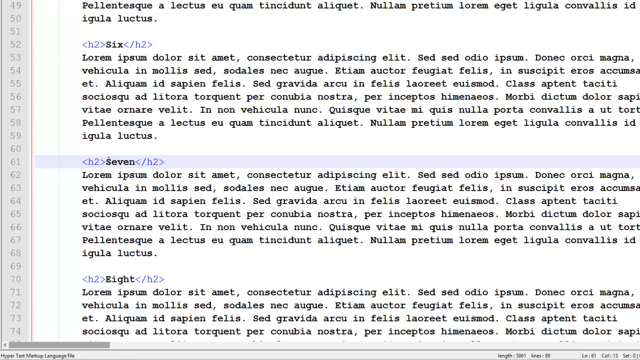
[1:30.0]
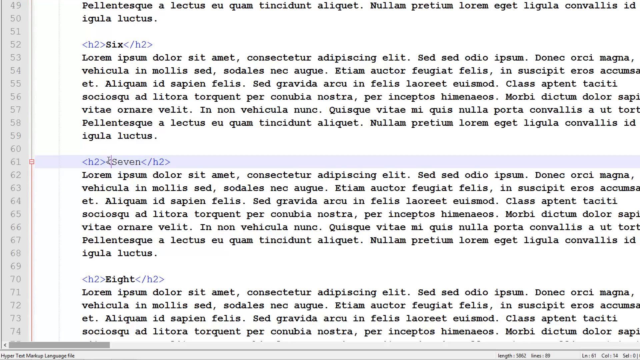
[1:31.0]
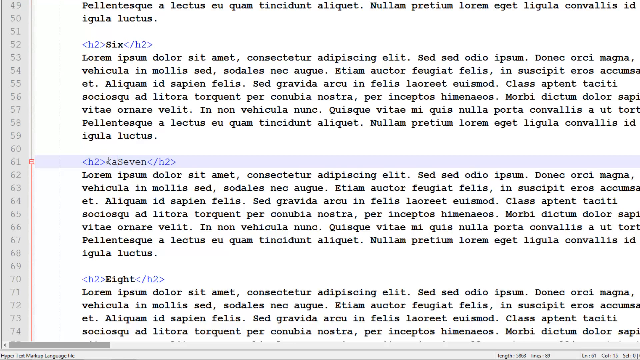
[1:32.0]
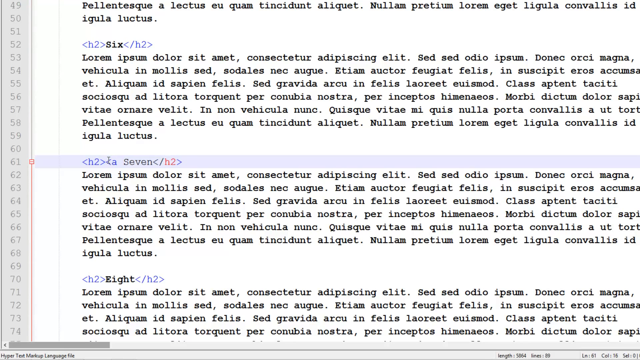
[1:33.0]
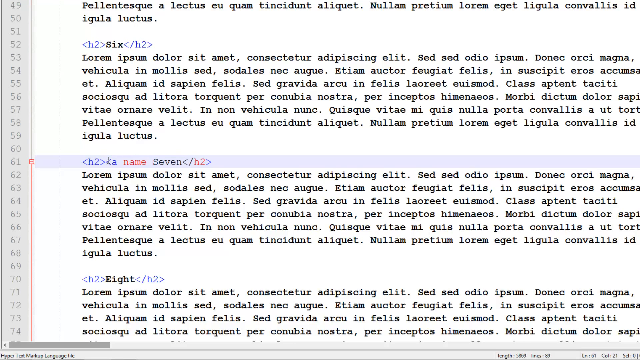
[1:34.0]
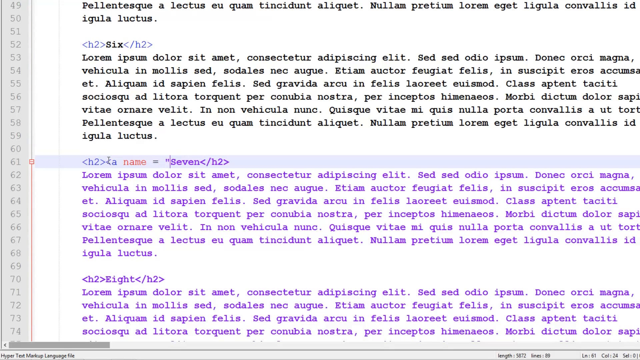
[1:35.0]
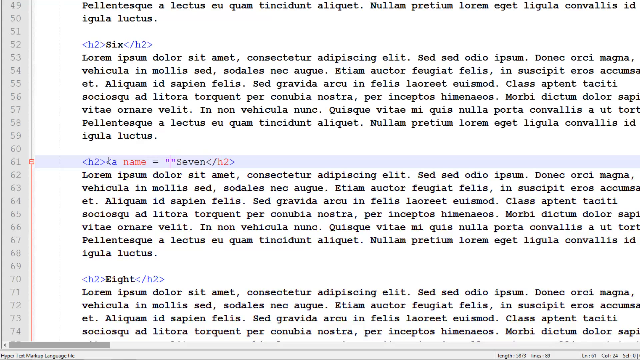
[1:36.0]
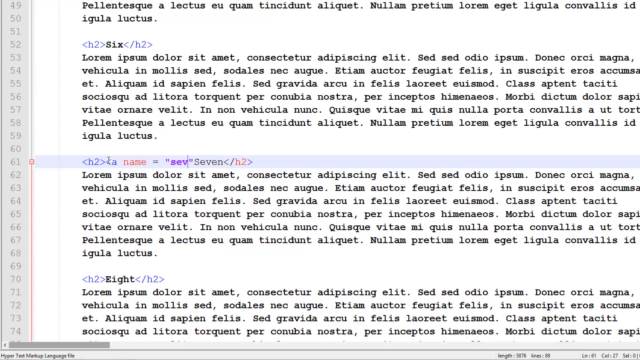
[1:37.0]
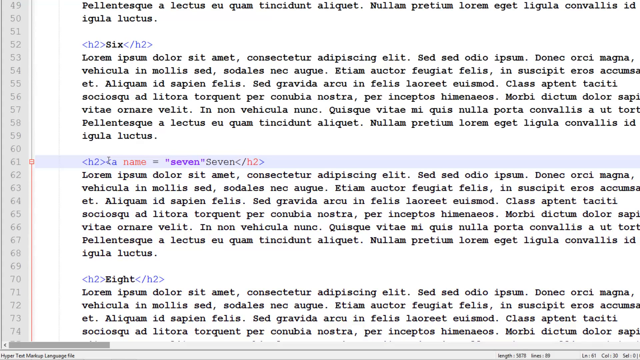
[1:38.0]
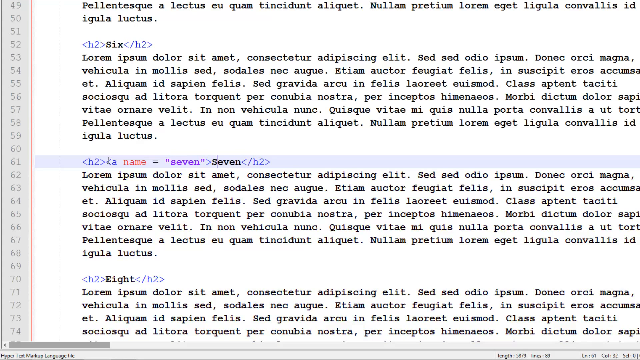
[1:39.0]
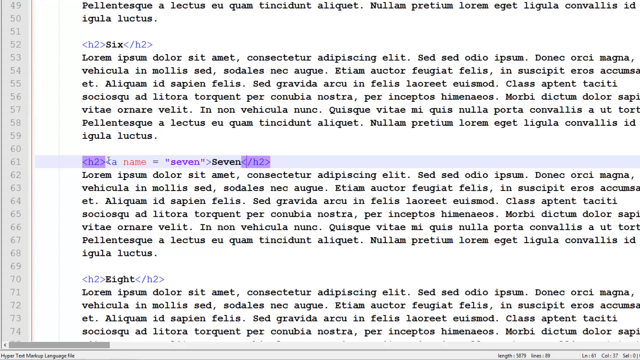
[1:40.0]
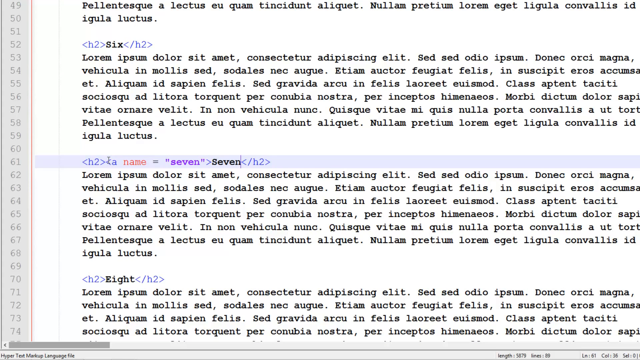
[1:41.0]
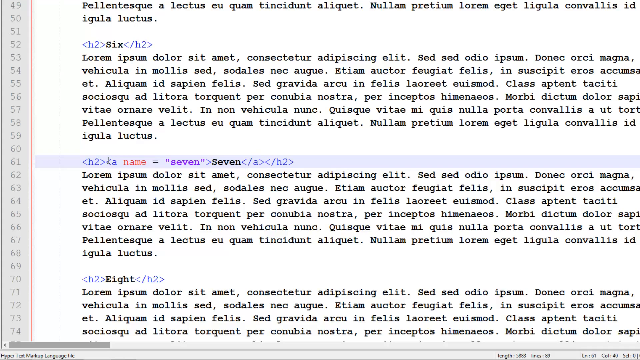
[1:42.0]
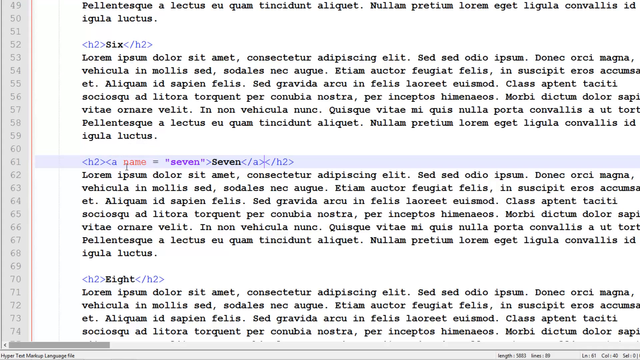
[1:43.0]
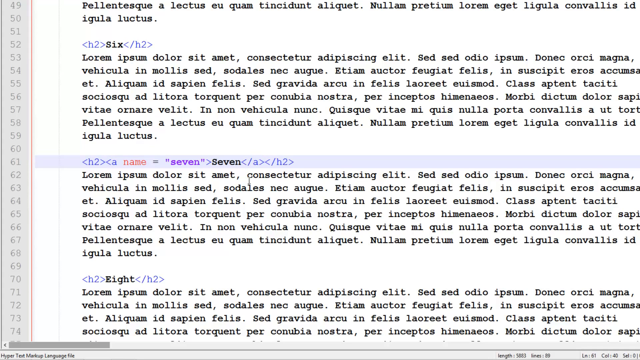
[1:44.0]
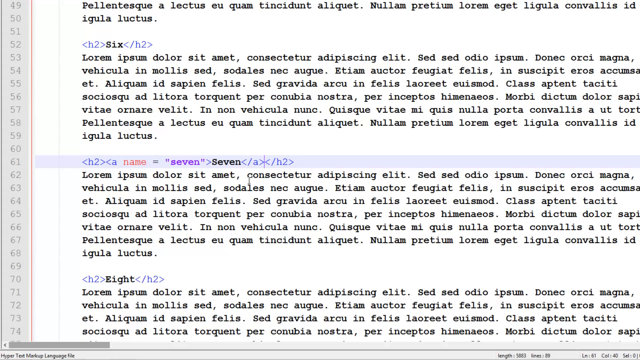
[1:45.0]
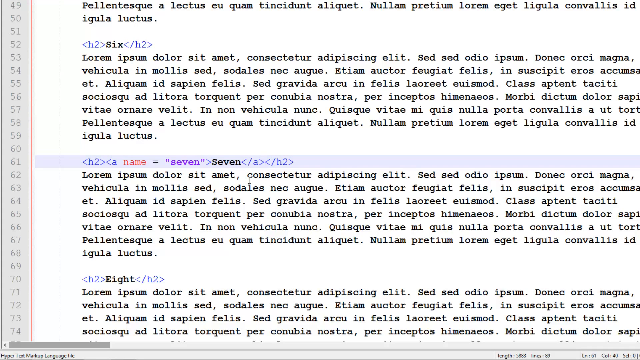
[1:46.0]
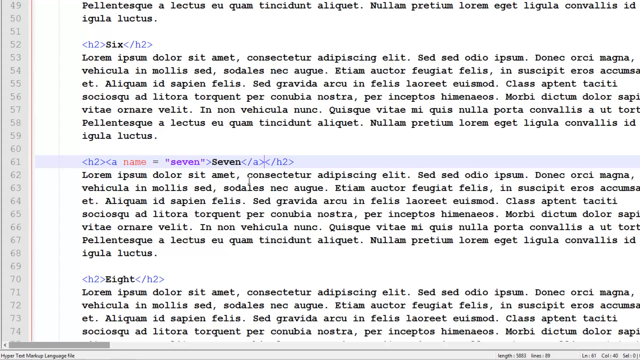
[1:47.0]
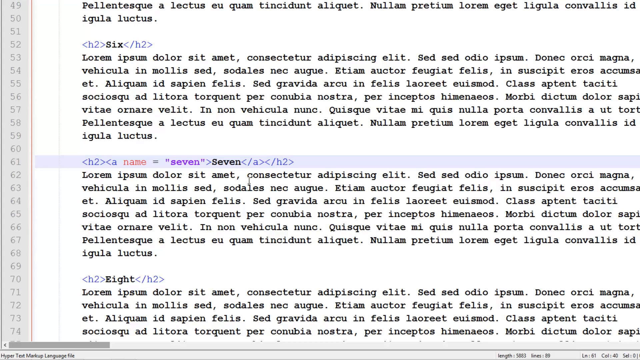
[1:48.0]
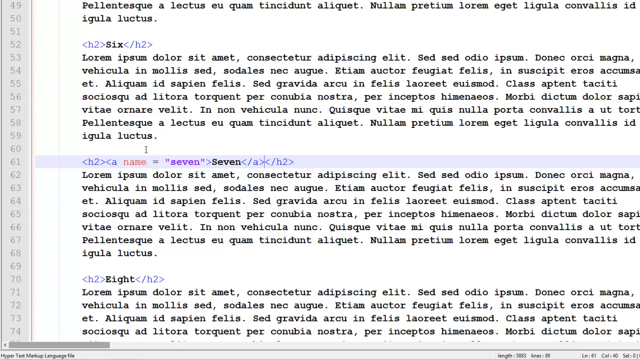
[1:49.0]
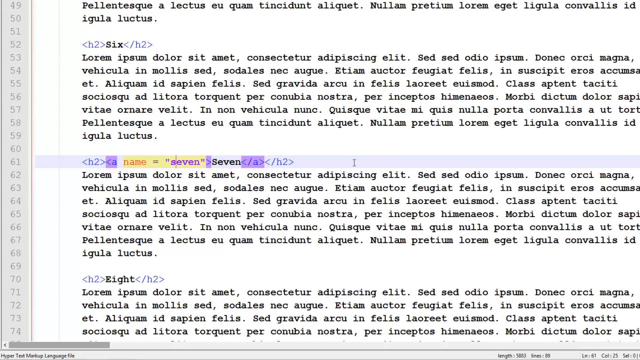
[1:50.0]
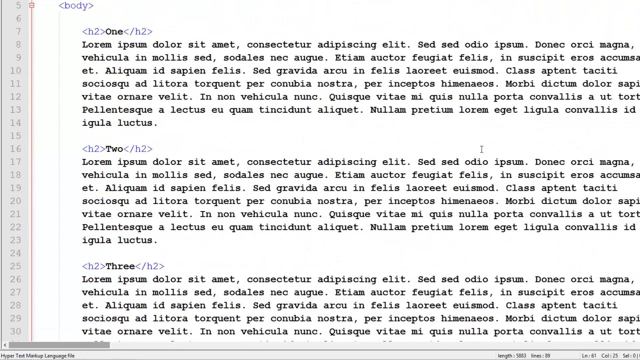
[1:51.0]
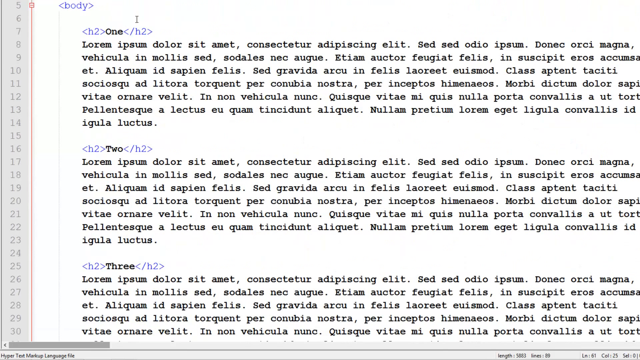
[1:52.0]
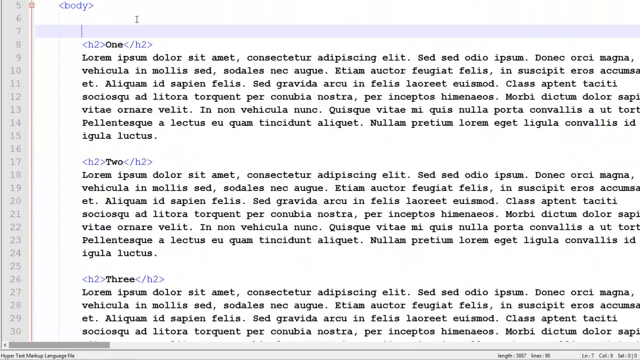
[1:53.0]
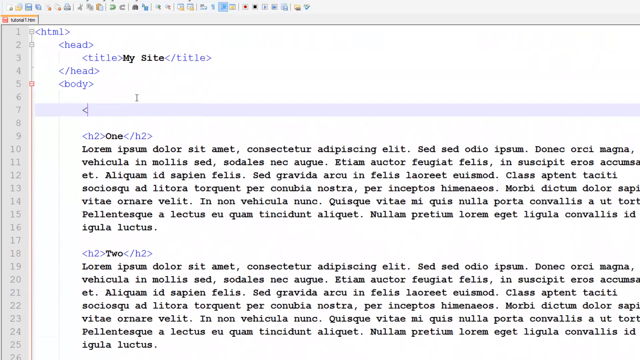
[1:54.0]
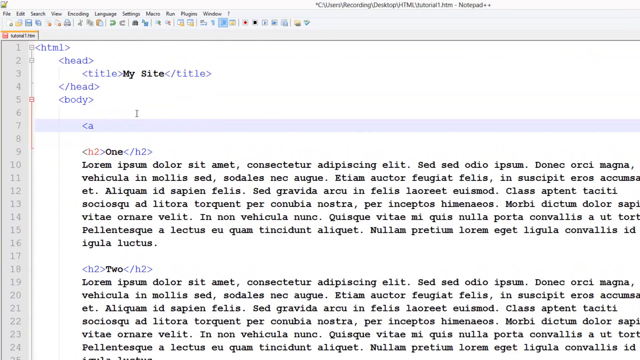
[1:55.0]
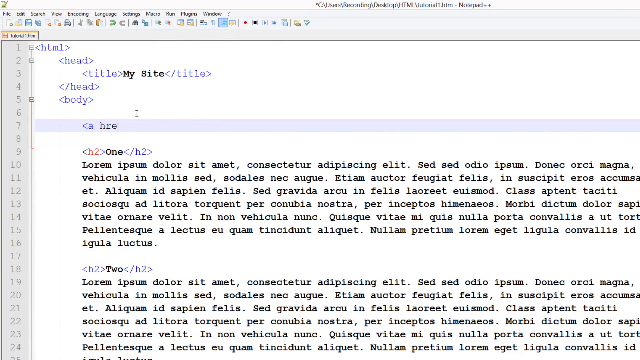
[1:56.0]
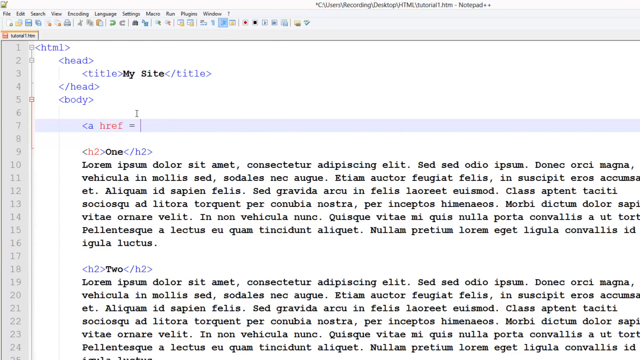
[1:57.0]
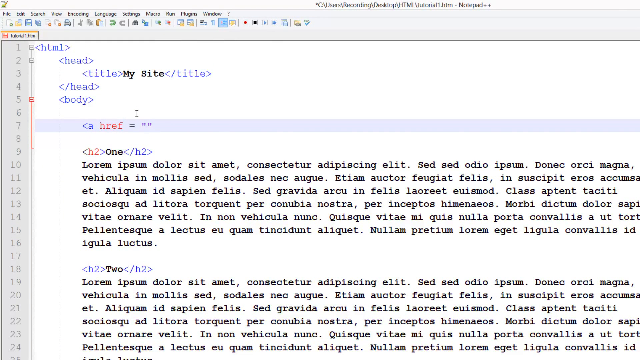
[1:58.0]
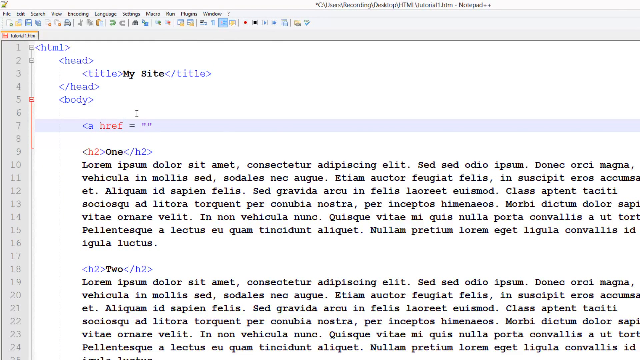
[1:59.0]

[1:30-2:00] The text is not English and appears to be template text. A highlighted line has a bracket with "H2," then the word seven in black with the S capitalized, then brackets again with "H2." The person starts typing: "name" appears in red, followed by an equal sign and quotation marks, with "7" in bold purple between them, then what looks like a greater-than symbol. The person keeps typing "/a" and a closing bracket. The whole line, line 61, is lit up again. The person then scrolls down to line 67, which has a bracket, "a," a space, then "href" in red, an equal sign and a set of quotation marks, and the person appears to start typing.